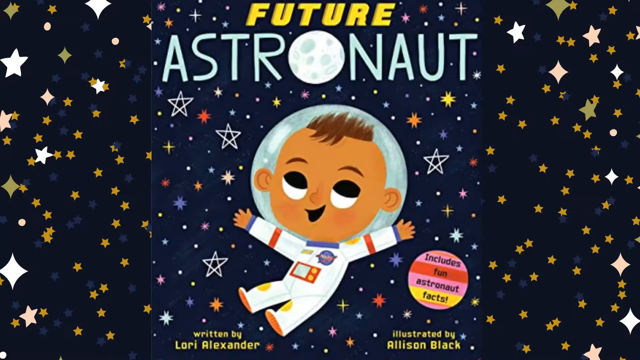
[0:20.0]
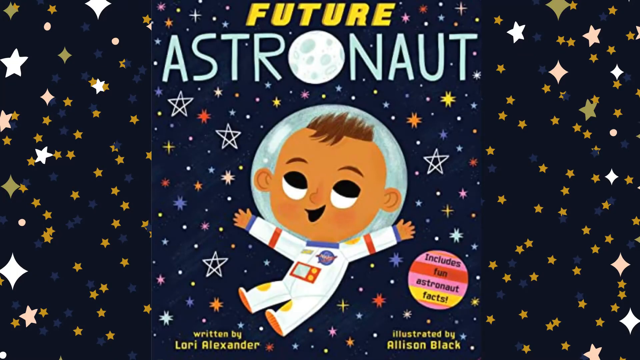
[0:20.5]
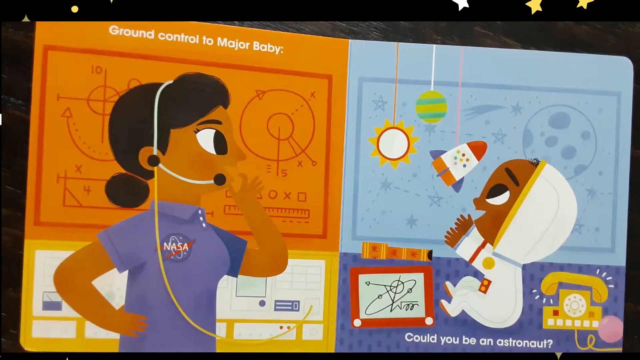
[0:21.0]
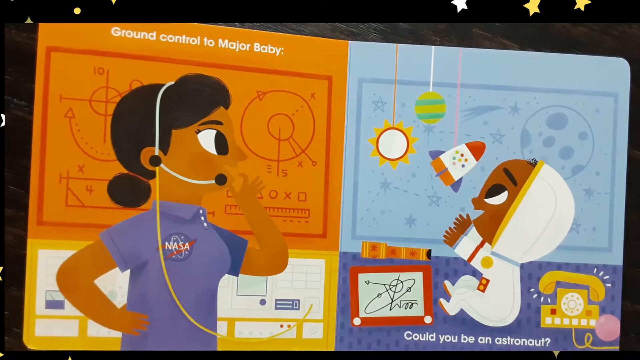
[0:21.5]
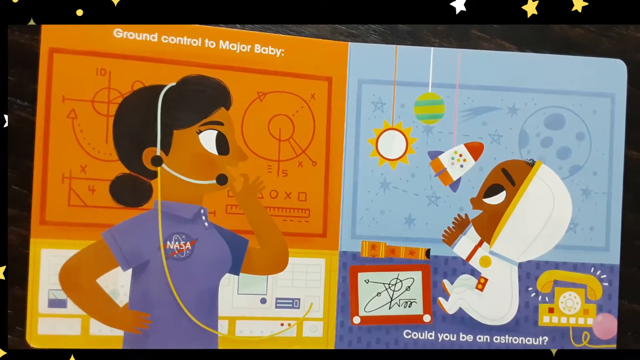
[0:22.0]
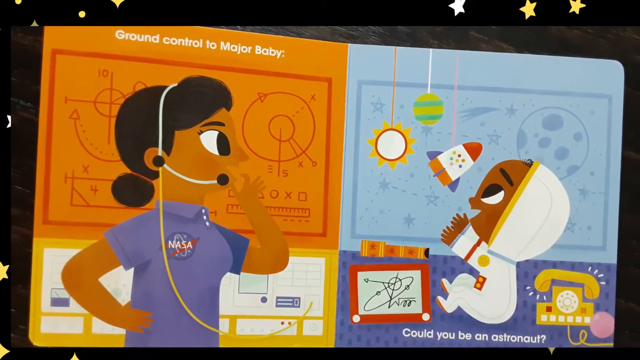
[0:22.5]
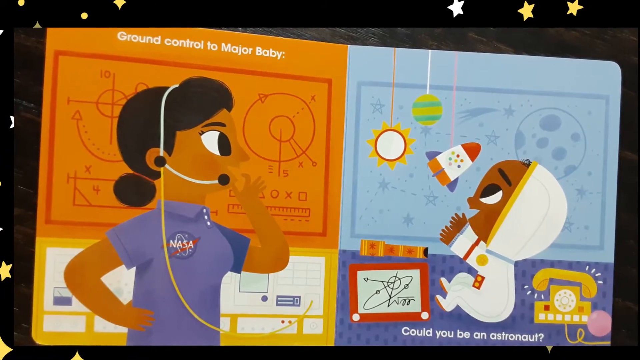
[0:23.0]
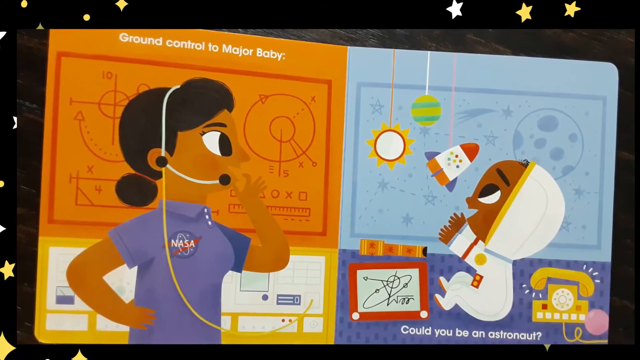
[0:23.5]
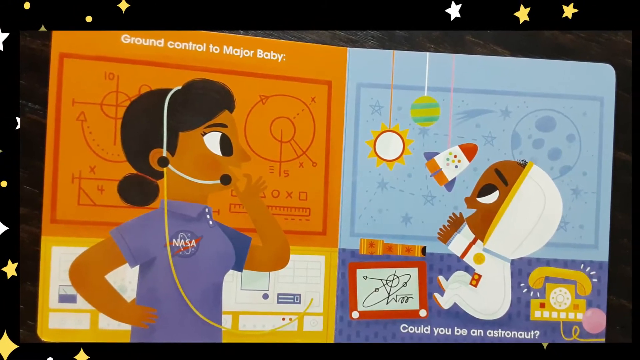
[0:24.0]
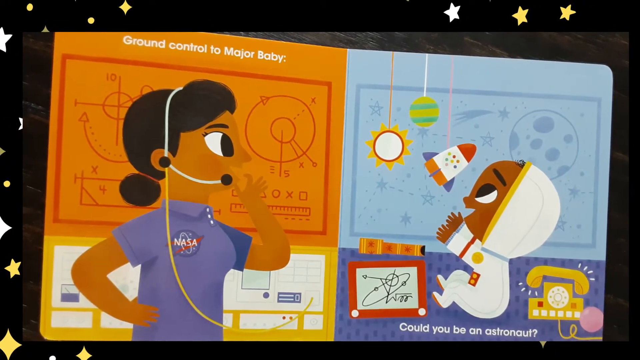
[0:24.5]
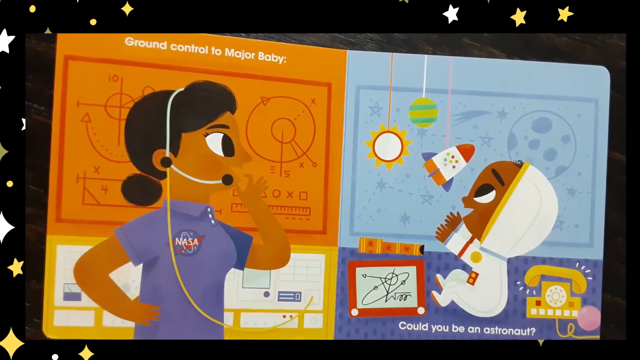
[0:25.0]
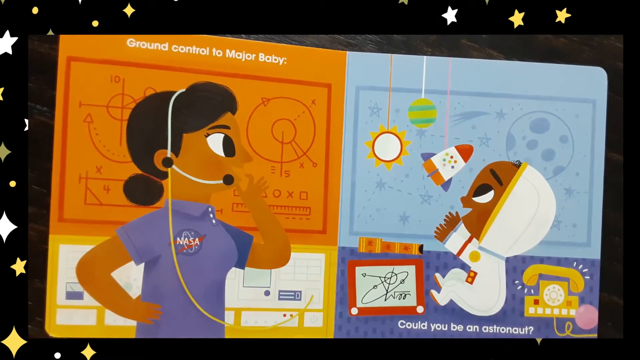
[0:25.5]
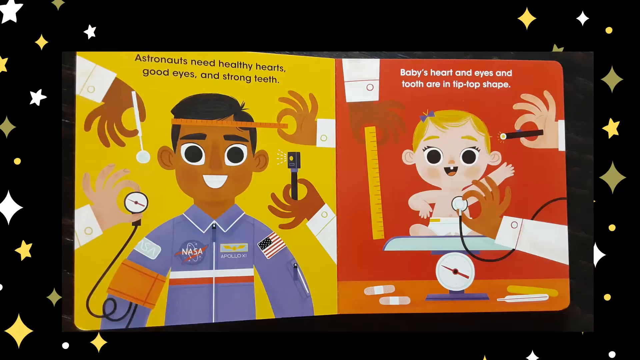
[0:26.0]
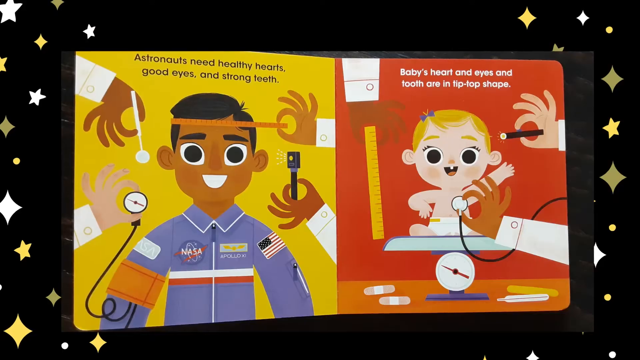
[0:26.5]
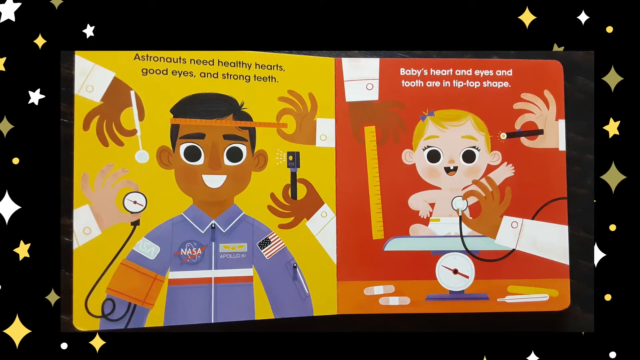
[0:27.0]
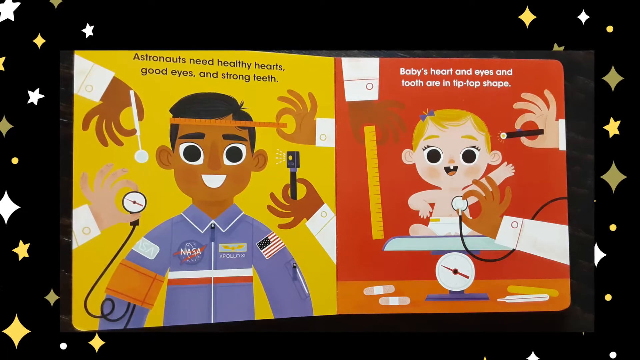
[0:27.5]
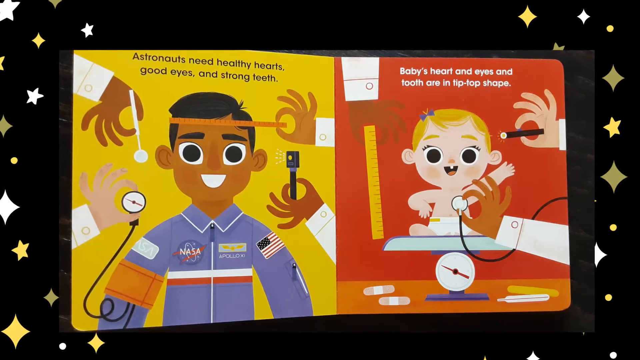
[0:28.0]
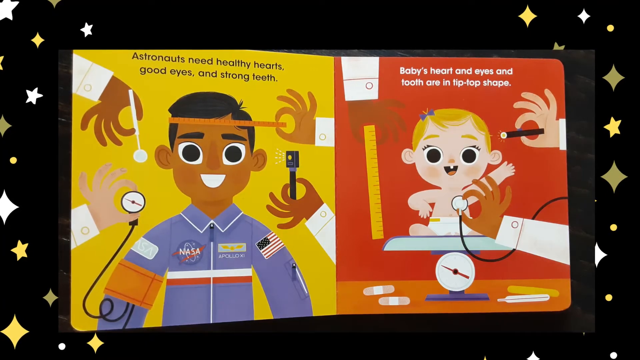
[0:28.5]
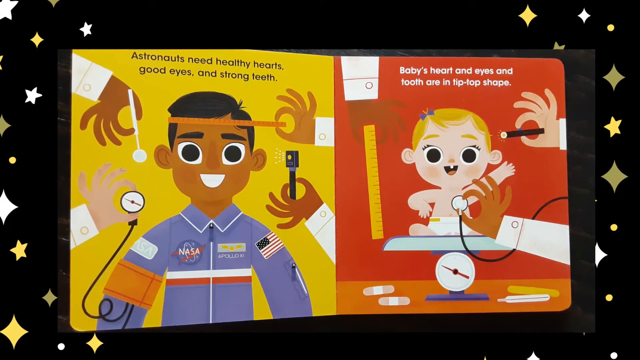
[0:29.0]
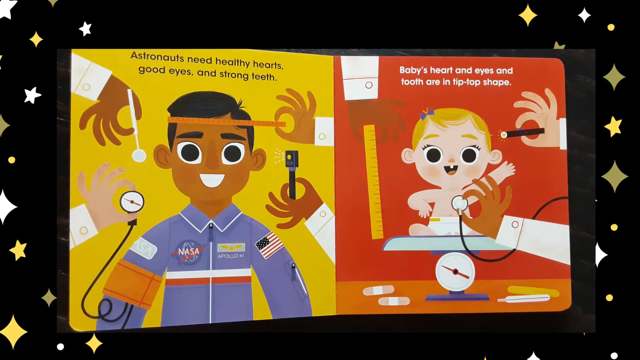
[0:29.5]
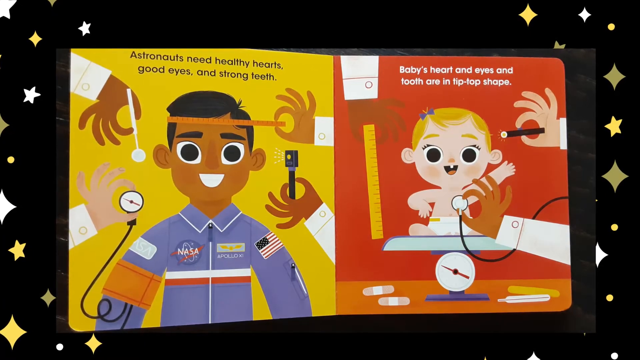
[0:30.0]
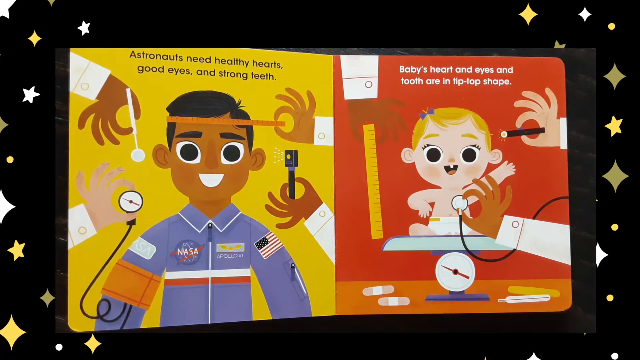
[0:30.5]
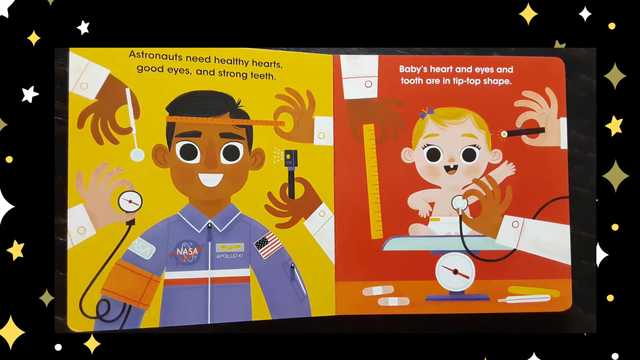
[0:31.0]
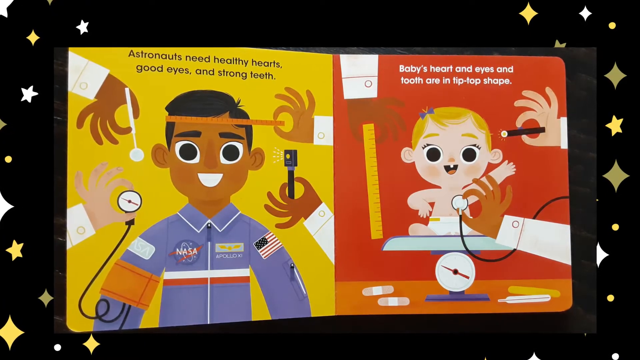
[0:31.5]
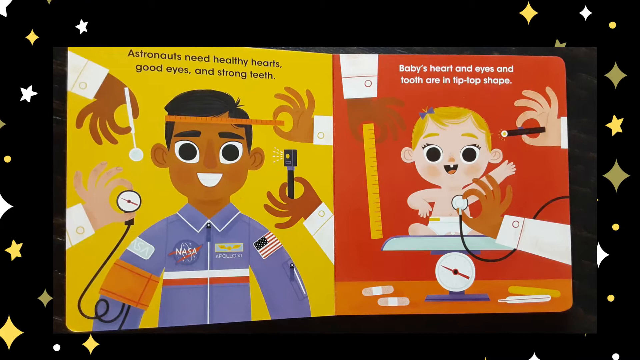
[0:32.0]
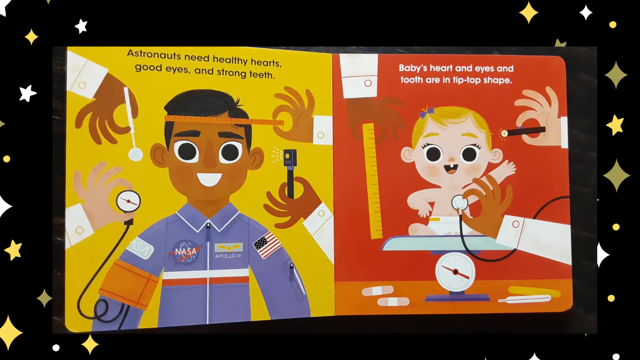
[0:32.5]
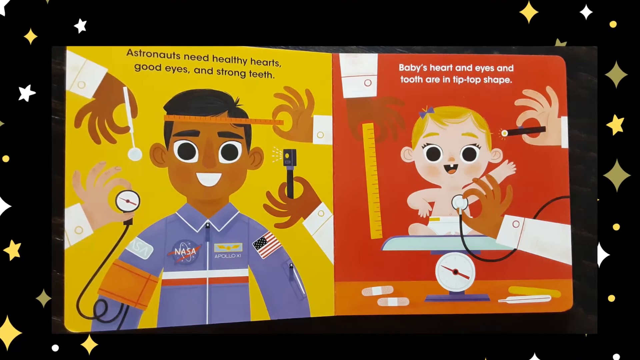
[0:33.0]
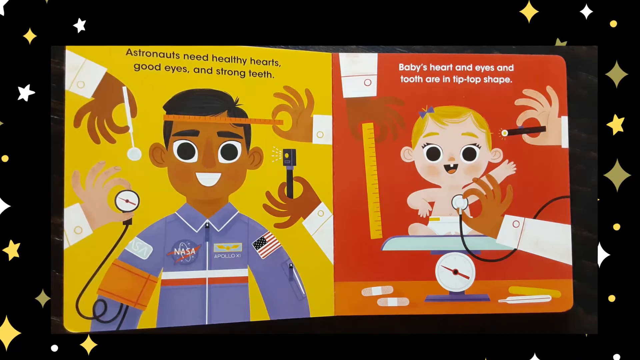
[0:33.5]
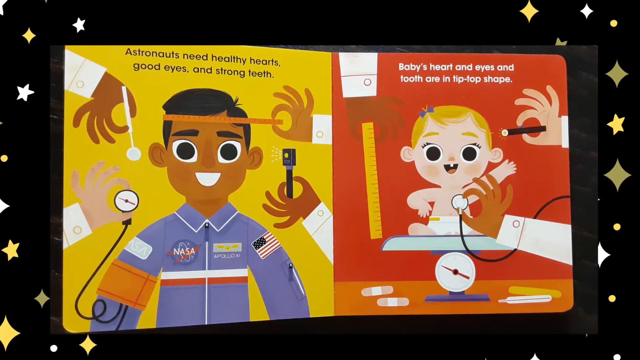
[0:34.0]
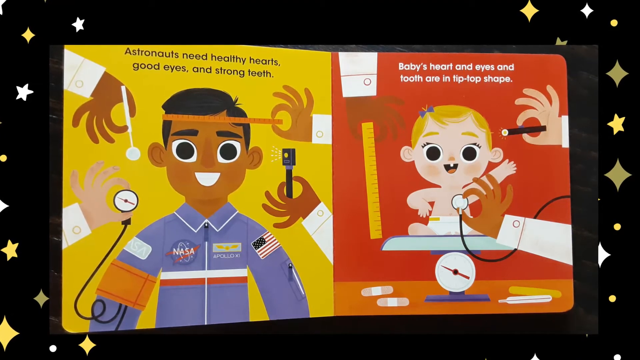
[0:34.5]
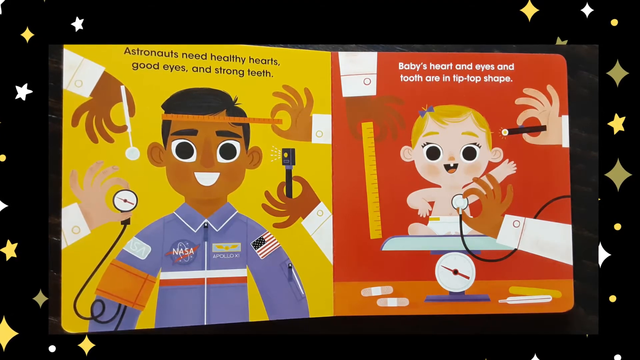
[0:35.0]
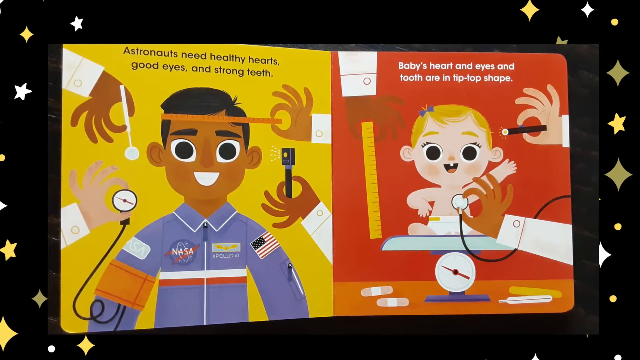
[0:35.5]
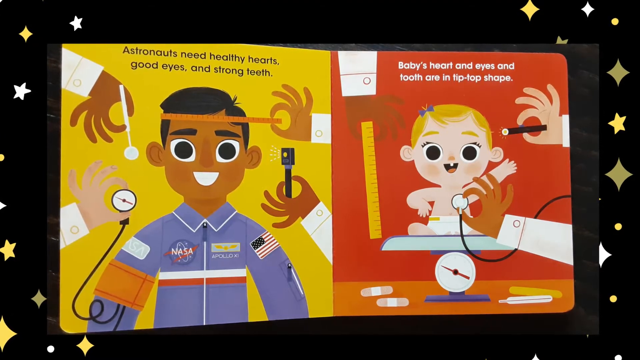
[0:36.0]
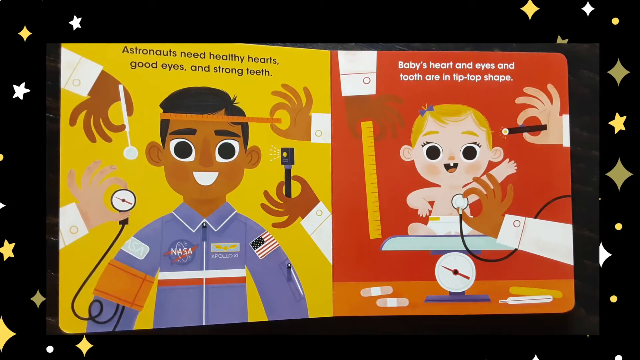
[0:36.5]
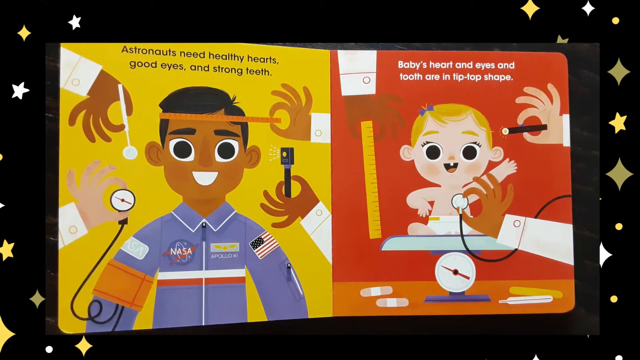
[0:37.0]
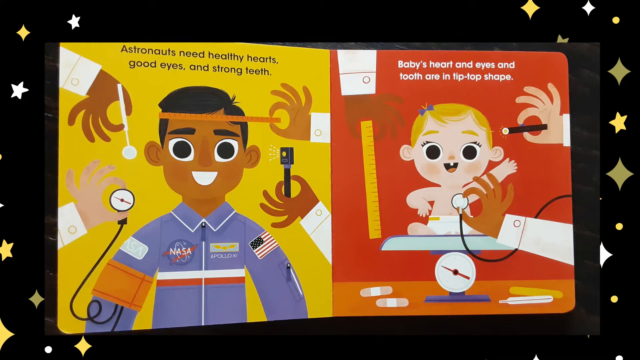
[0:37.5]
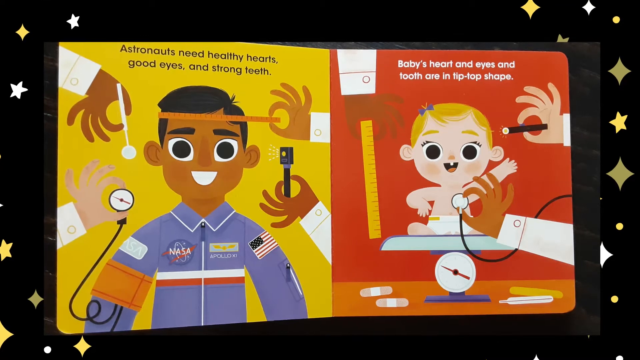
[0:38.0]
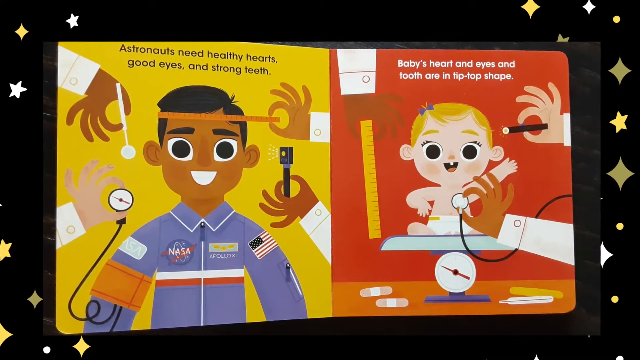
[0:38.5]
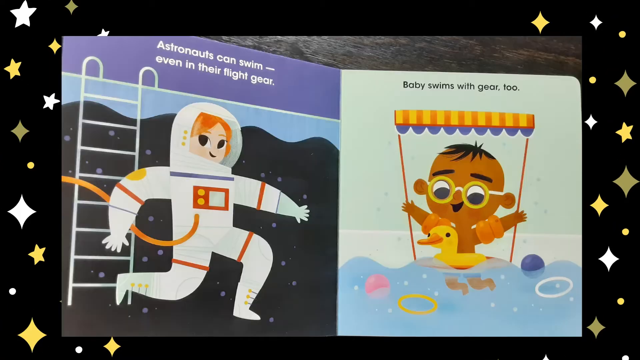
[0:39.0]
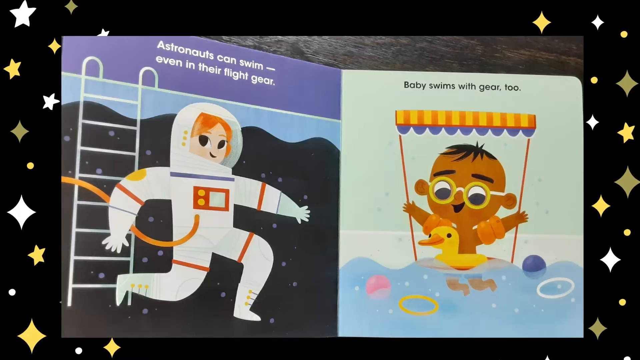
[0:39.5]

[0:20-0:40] The astronaut appears against the stars background. The screen shifts to the small baby astronaut speaking to someone who holds a microphone, with text reading "ground control" written on screen. The background is orange with drawings, and then blue with shapes. The baby astronaut looks up, smiling, and text at the bottom reads "could you be an astronaut". The background shifts to two pages, somewhat like a book: on the left is a cartoon man from NASA, with hands holding a stick and one holding a circle that looks somewhat like a clock. The other page shows a small baby.